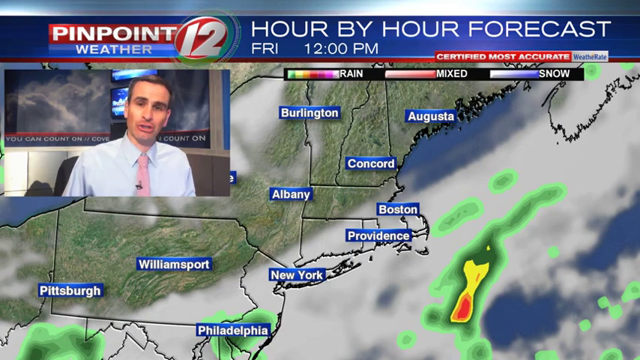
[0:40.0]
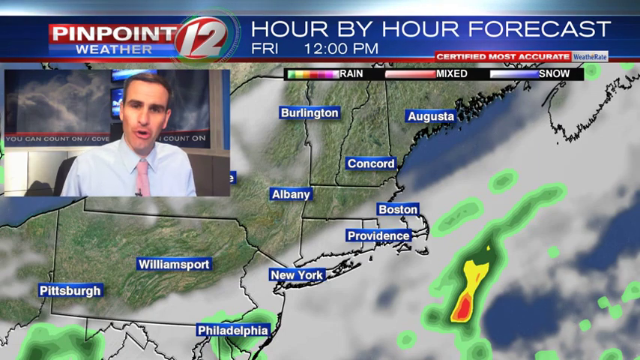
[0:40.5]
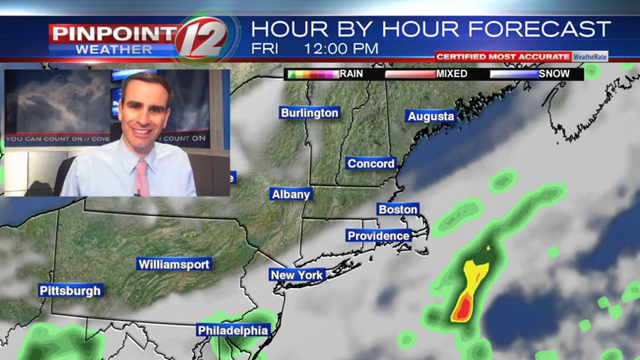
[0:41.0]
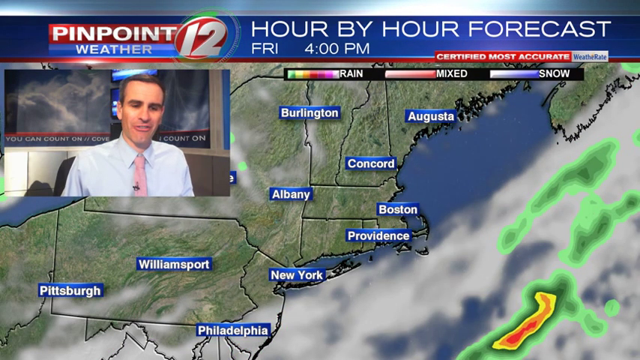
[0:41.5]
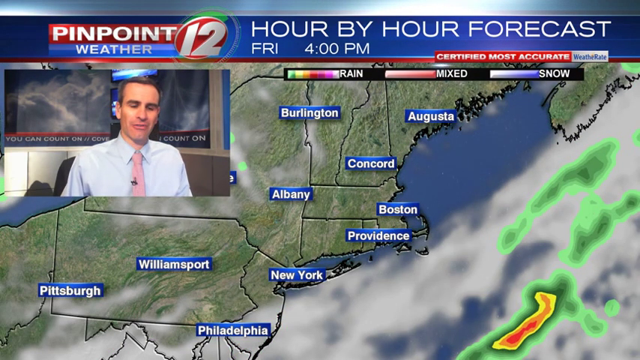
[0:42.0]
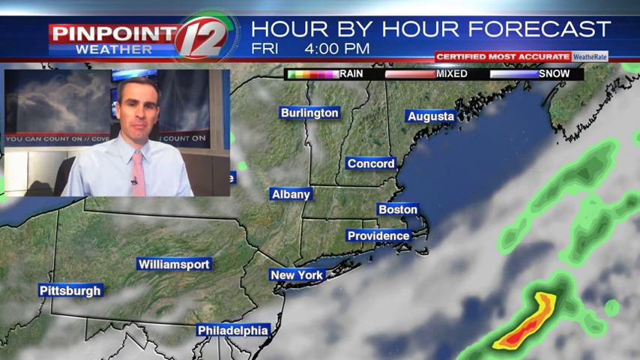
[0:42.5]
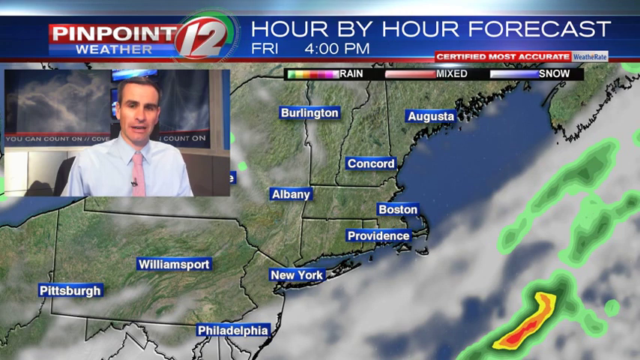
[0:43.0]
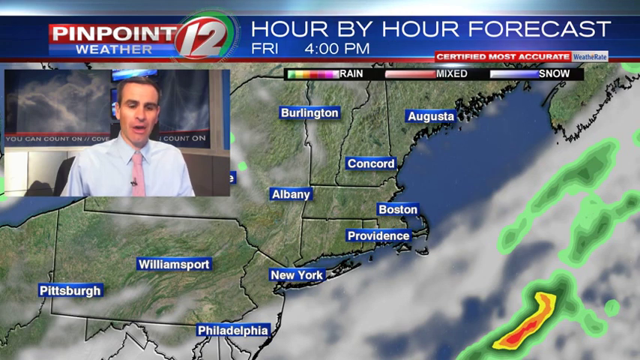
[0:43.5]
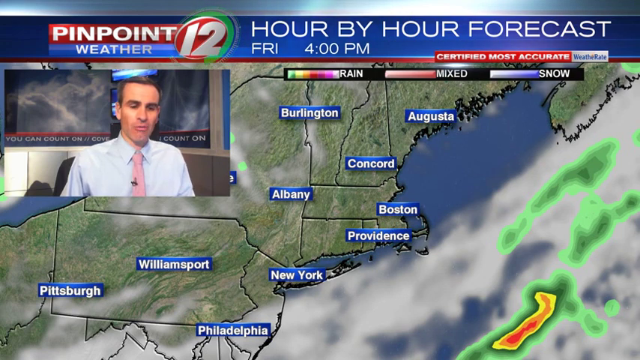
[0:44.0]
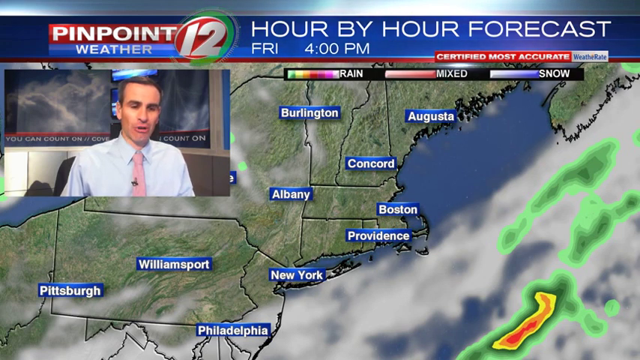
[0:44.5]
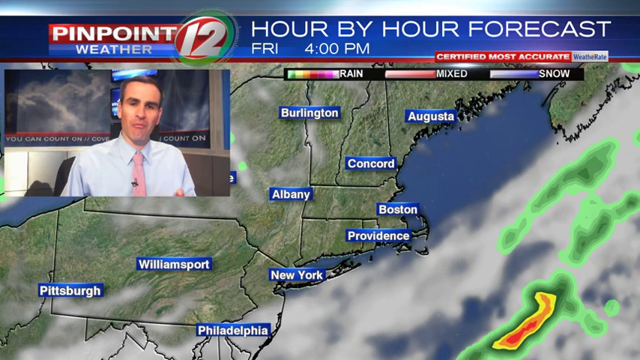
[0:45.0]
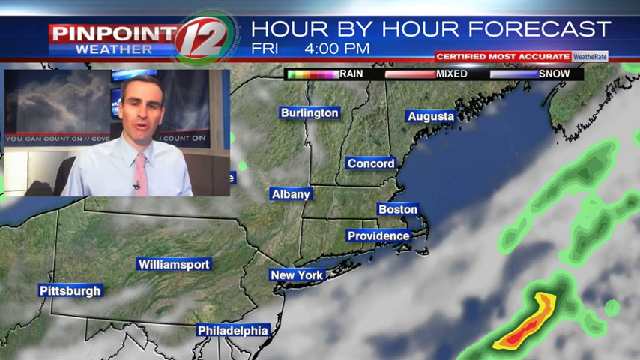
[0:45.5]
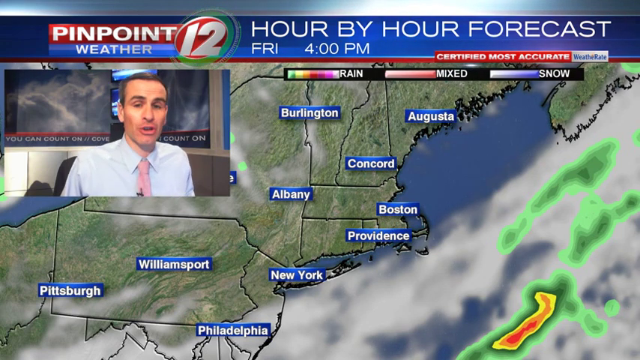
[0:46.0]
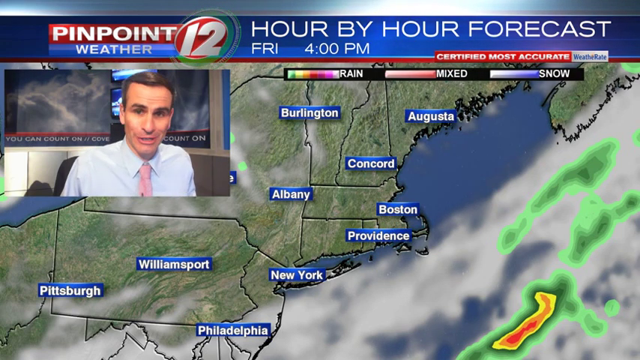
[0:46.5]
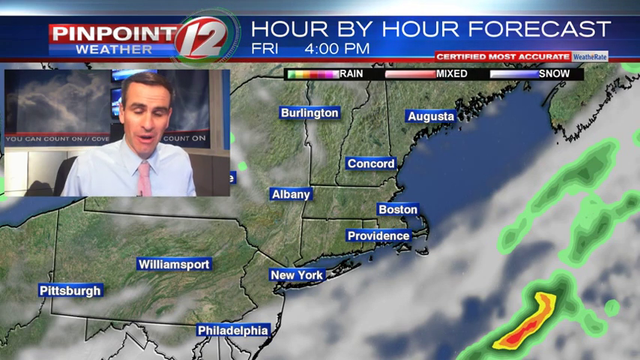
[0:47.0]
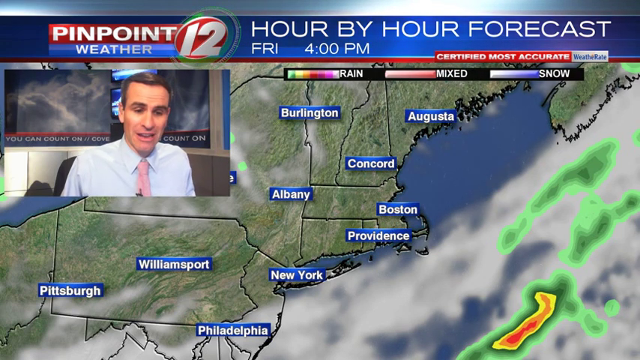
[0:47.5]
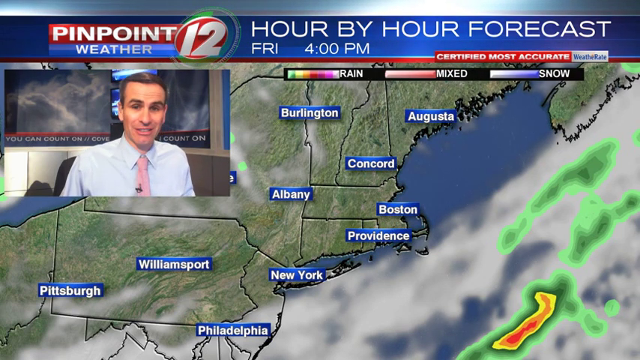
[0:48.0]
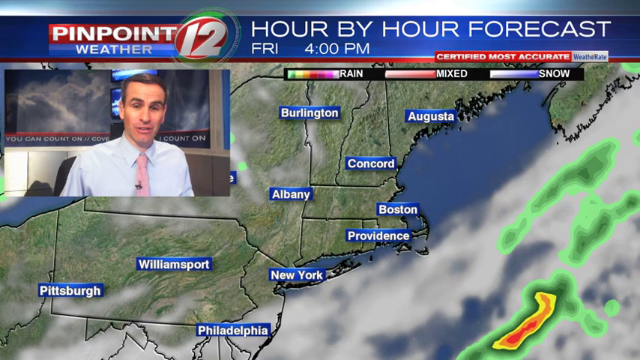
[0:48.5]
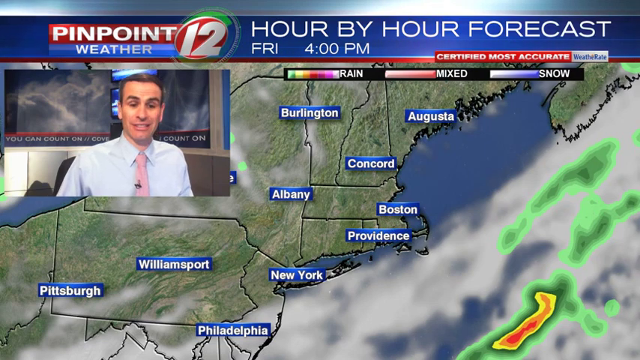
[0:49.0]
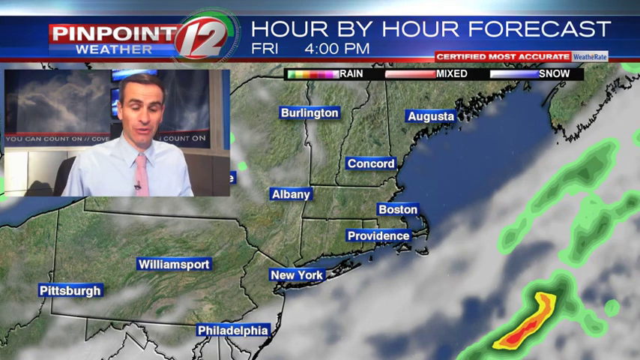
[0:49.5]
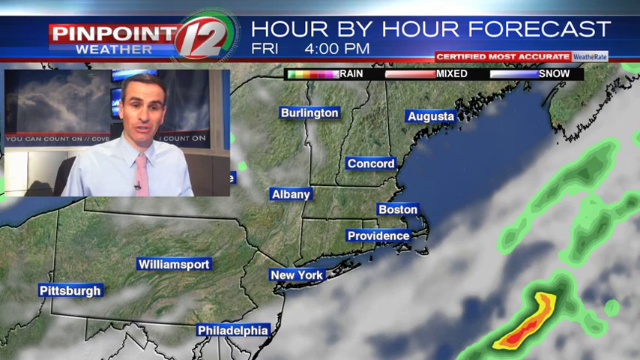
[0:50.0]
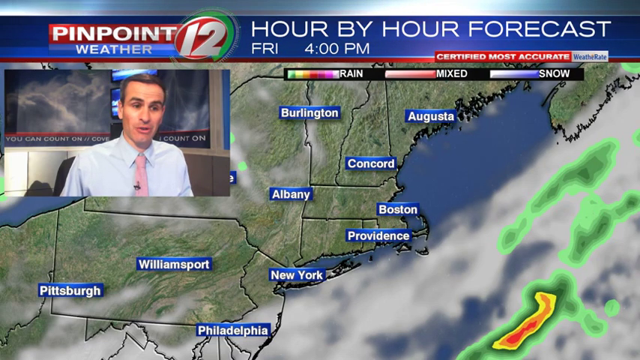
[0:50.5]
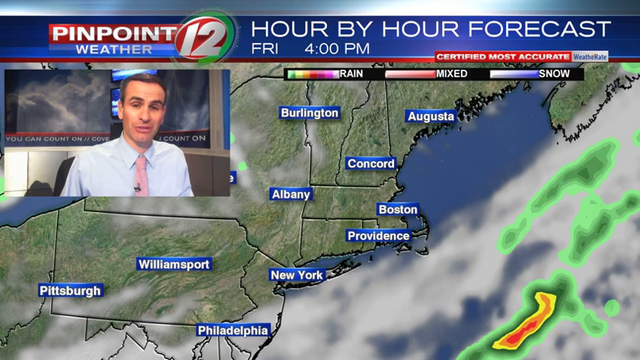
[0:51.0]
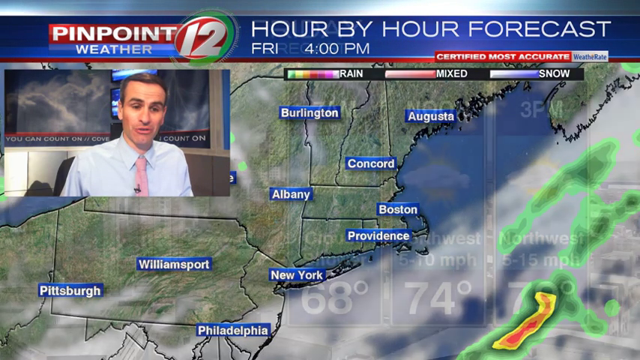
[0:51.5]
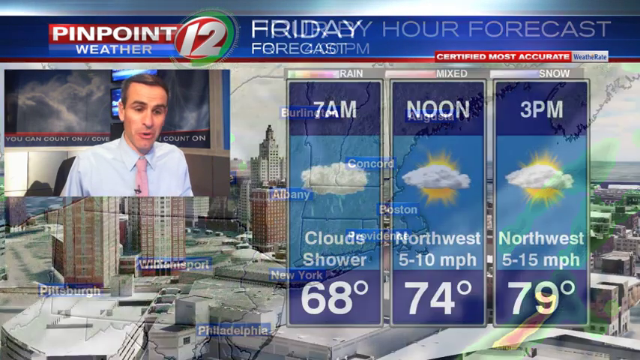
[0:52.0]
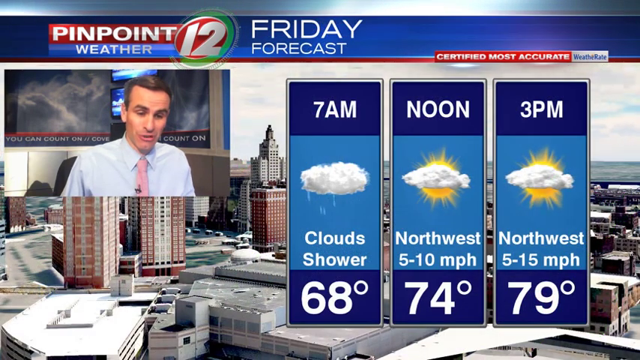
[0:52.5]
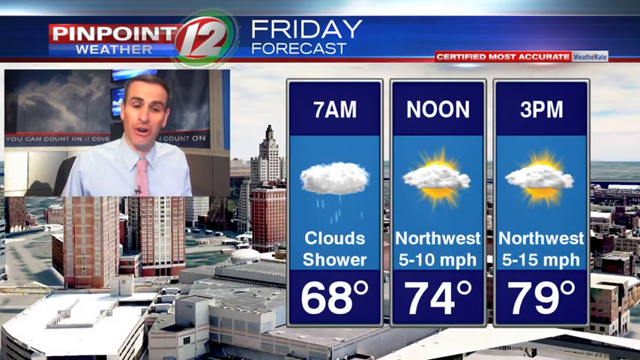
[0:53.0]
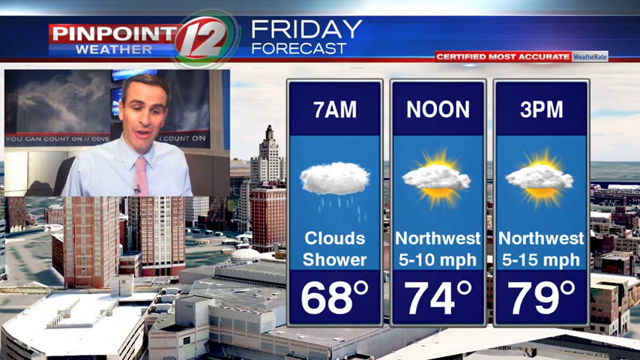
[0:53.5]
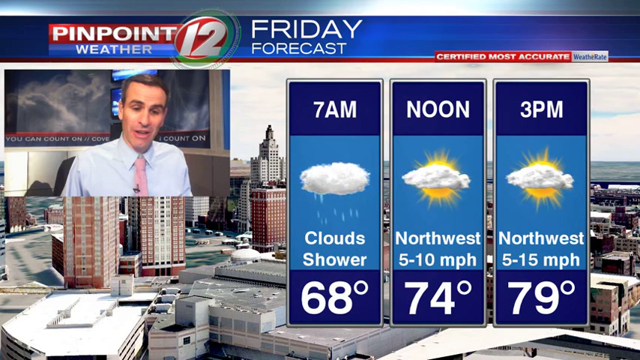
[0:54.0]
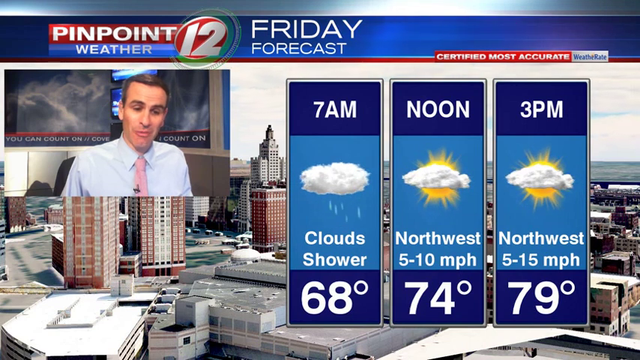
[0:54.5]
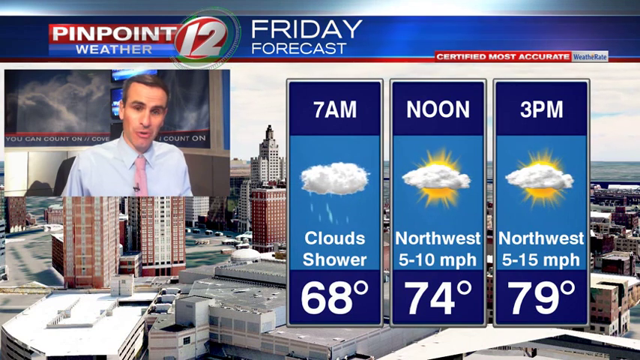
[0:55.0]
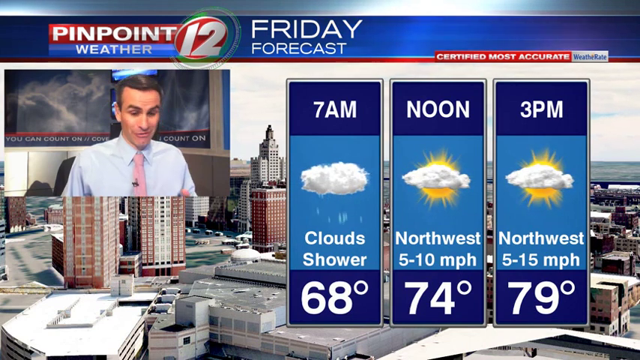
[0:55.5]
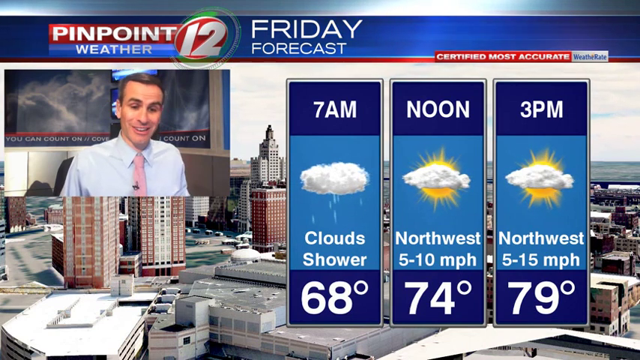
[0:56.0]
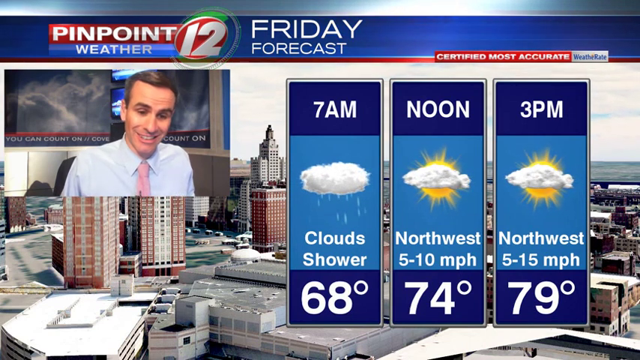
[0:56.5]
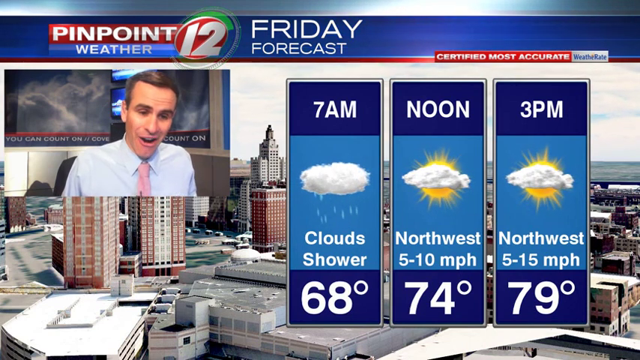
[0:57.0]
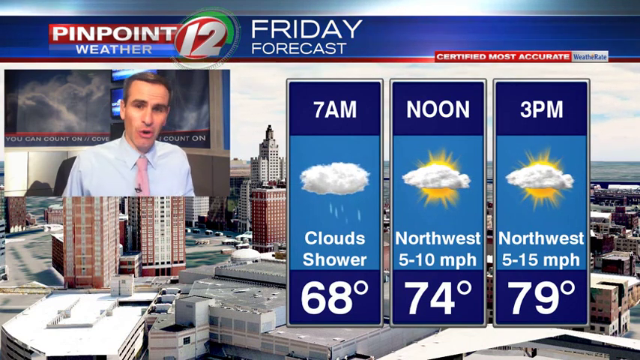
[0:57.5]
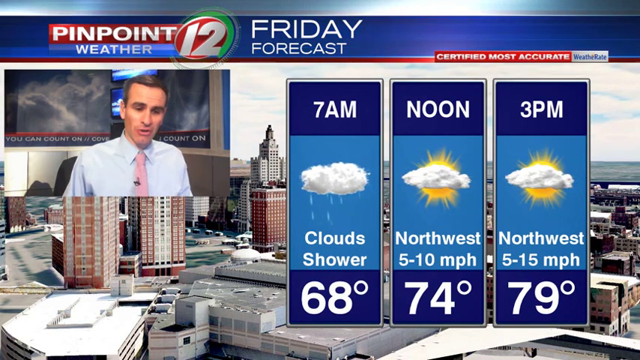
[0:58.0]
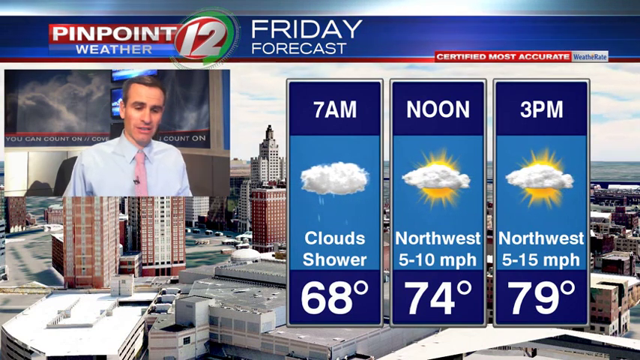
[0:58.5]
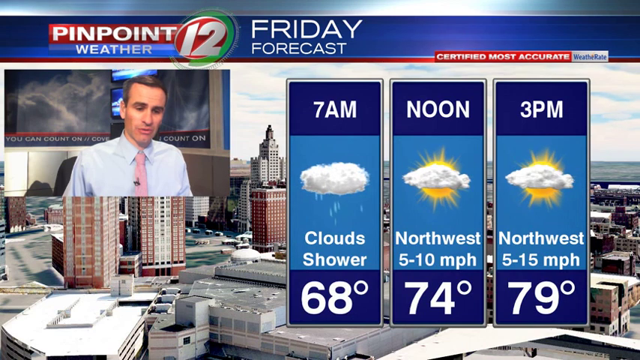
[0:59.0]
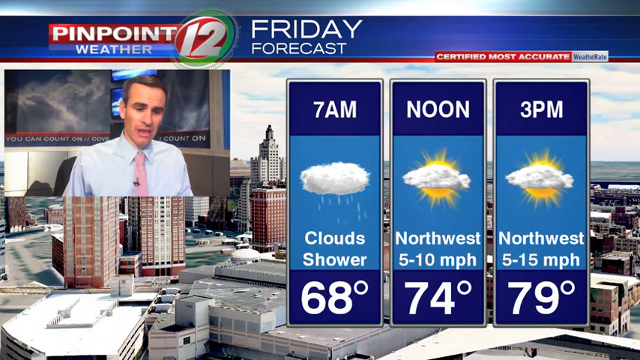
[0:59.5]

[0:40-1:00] The man on the left side of the screen smiles at the camera as he speaks, while the clouds and green patches on the map move slightly and then pause. Speaking directly to the camera, he raises part of his left hand barely into the bottom of the frame and back down, then raises it again and back down. He leans forward slightly so that he ends up closer to the camera, then slowly leans back, and his right hand comes up into the frame briefly. The background then changes from the map to a picture of a city from the sky, with lots of buildings and their roofs visible. In front of it is a forecast for 7 a.m., noon and 3 p.m.